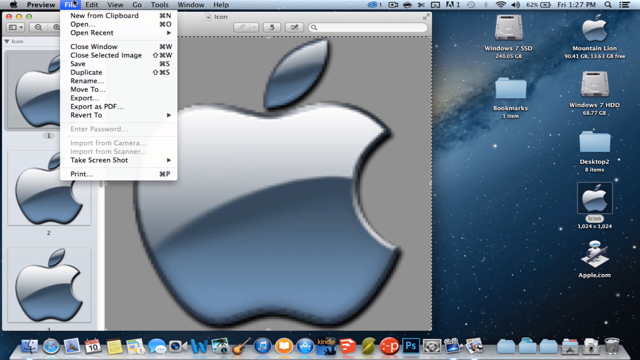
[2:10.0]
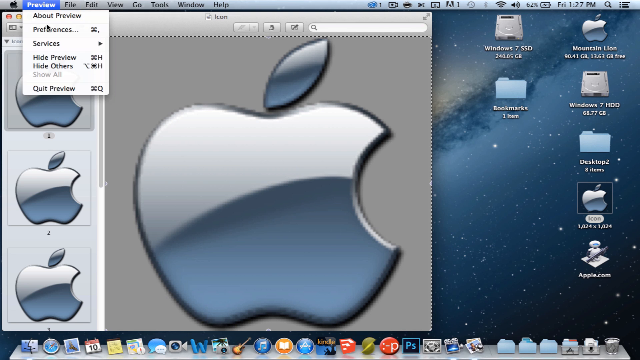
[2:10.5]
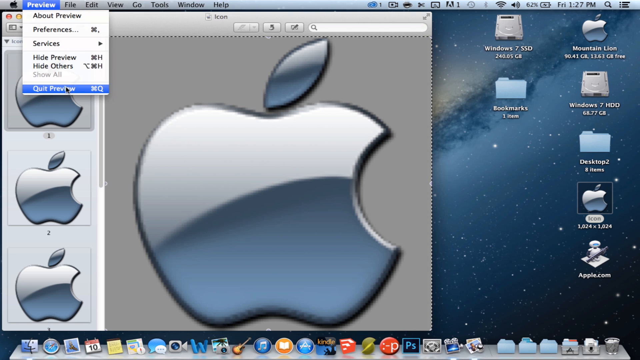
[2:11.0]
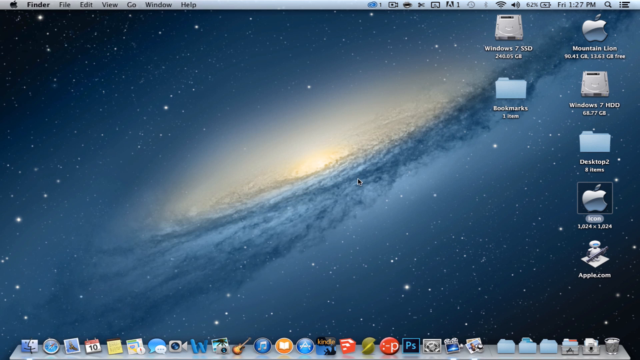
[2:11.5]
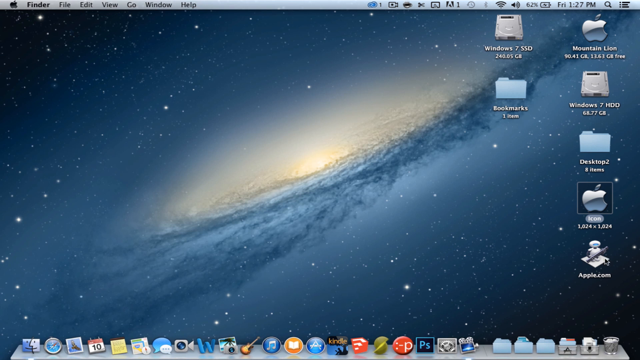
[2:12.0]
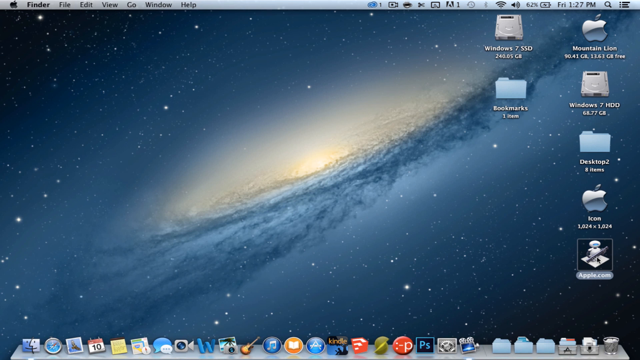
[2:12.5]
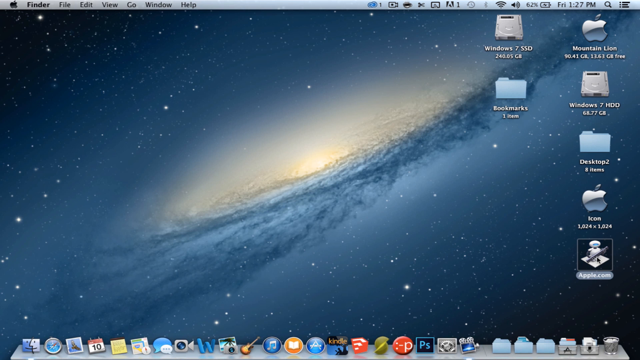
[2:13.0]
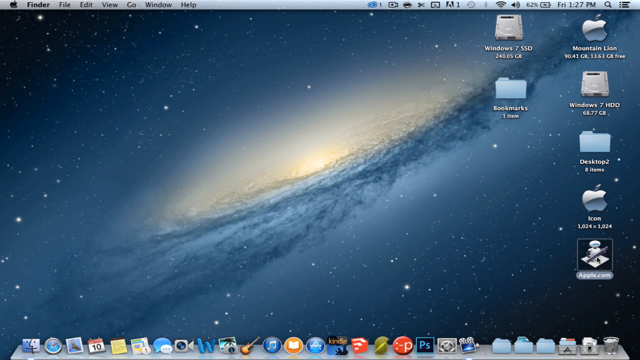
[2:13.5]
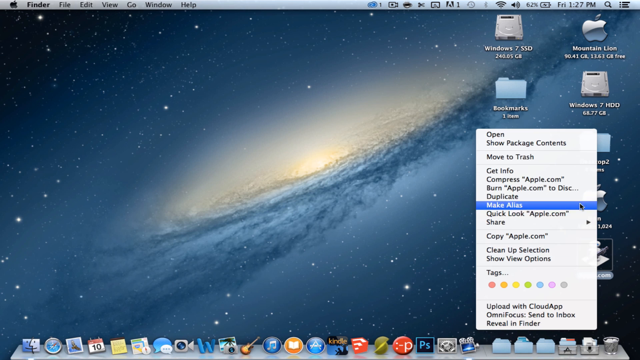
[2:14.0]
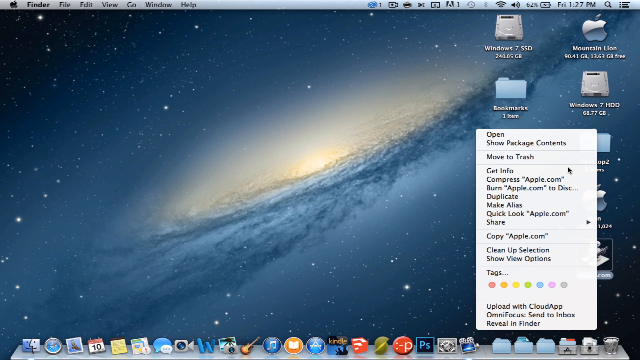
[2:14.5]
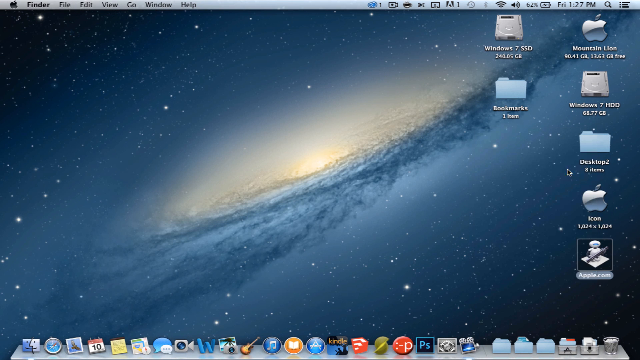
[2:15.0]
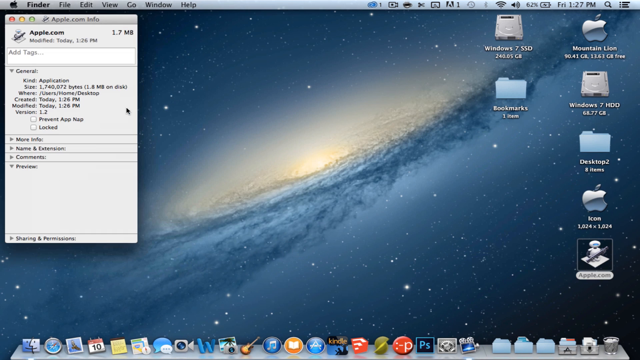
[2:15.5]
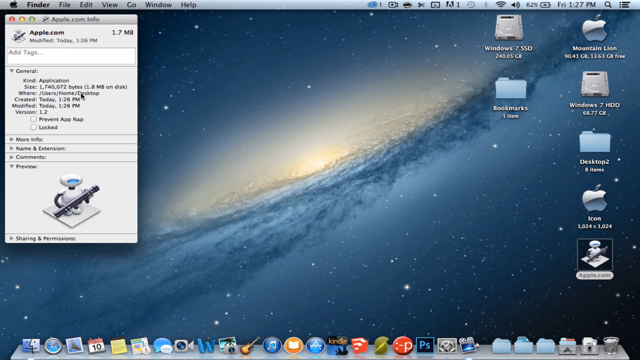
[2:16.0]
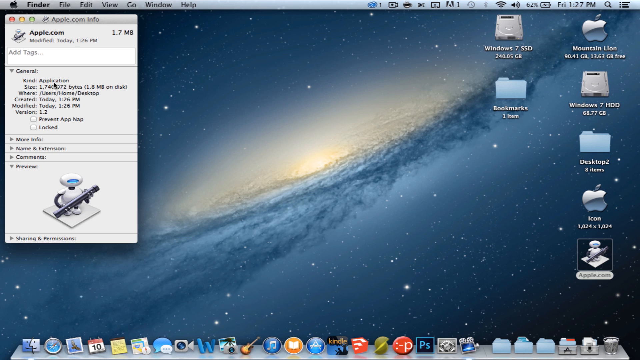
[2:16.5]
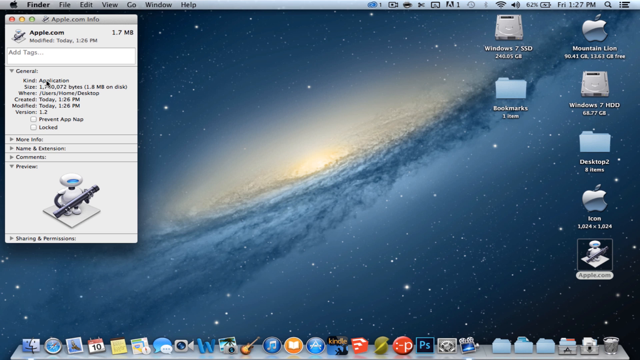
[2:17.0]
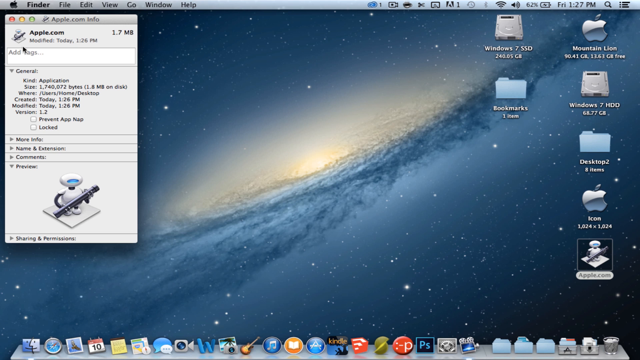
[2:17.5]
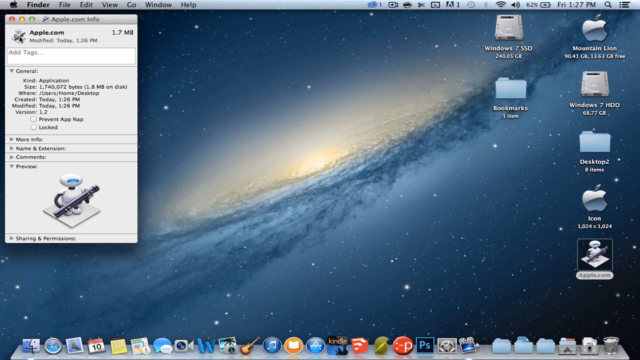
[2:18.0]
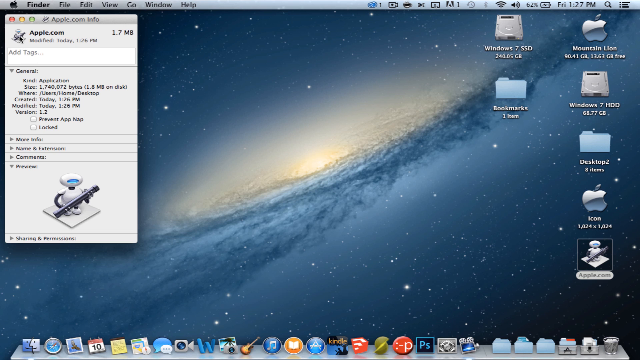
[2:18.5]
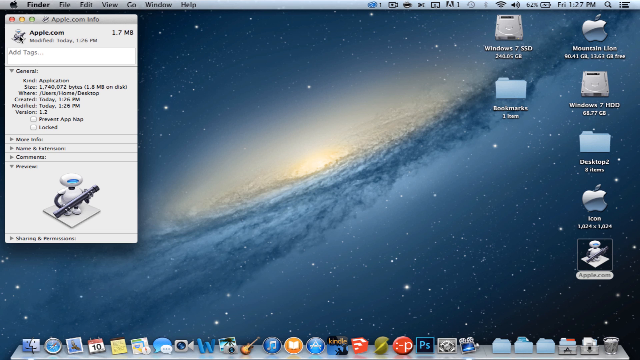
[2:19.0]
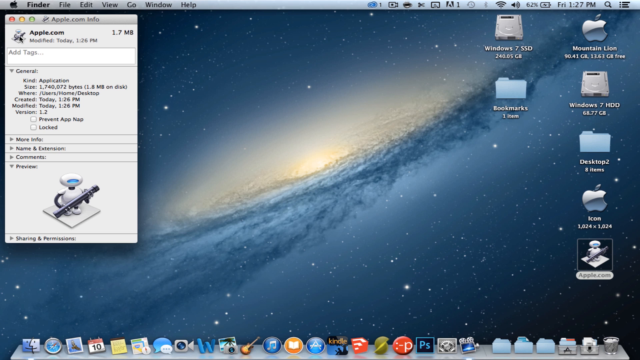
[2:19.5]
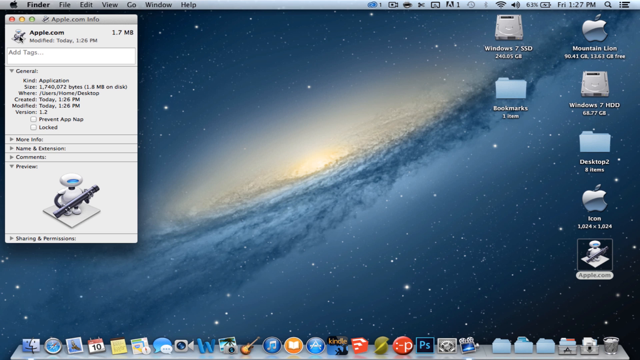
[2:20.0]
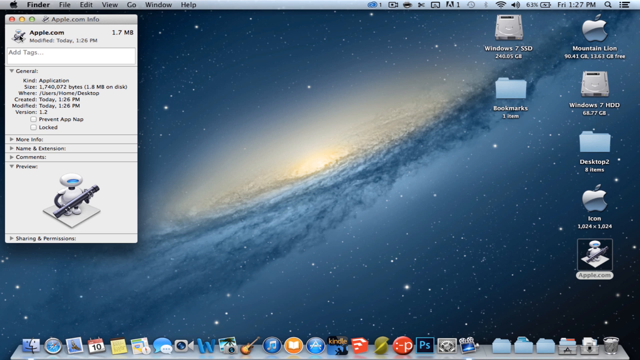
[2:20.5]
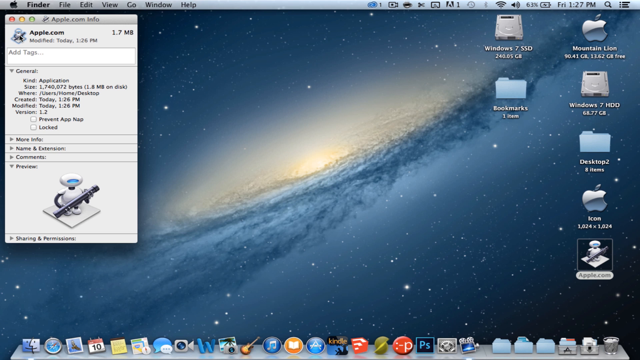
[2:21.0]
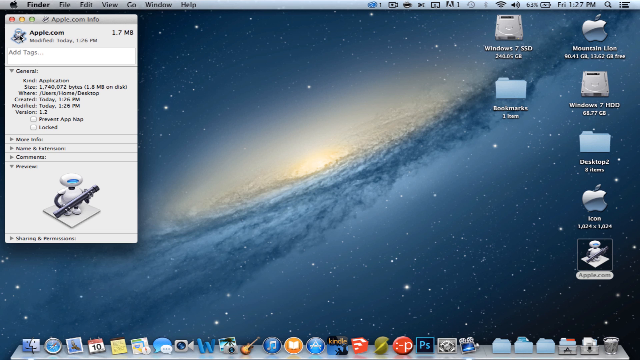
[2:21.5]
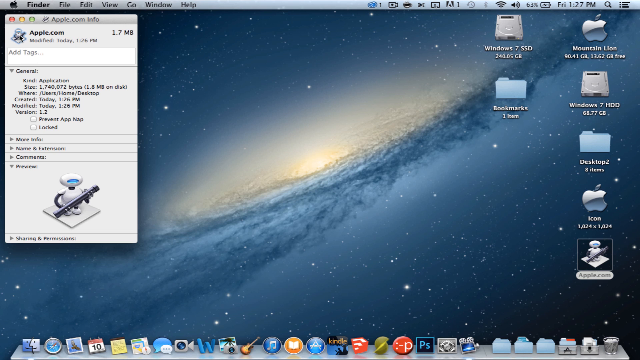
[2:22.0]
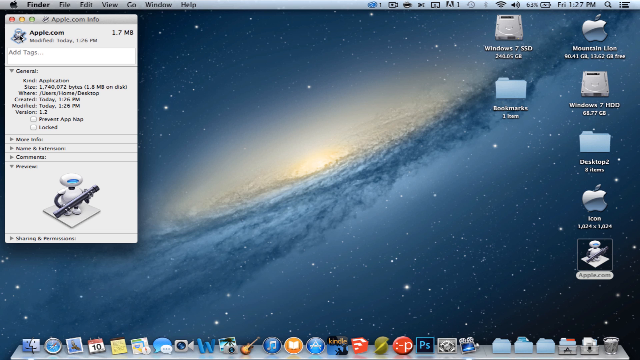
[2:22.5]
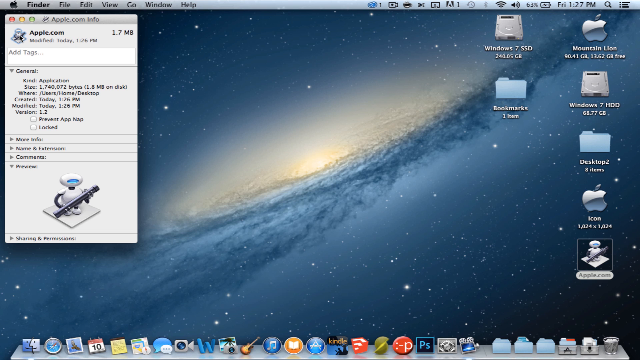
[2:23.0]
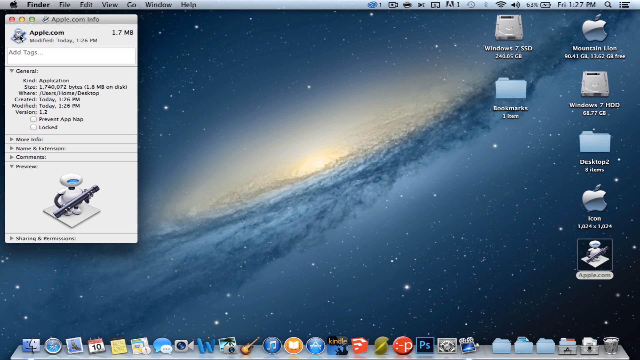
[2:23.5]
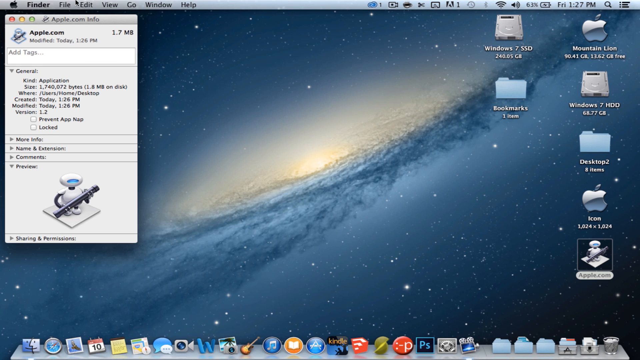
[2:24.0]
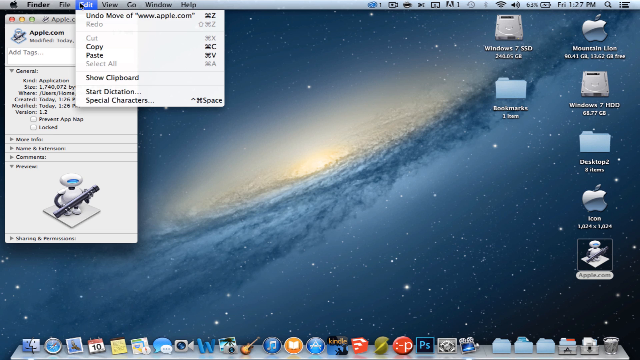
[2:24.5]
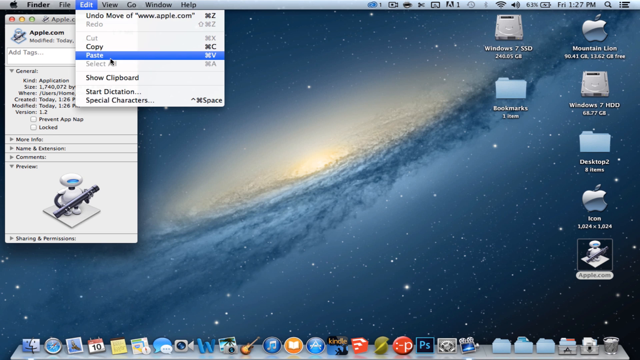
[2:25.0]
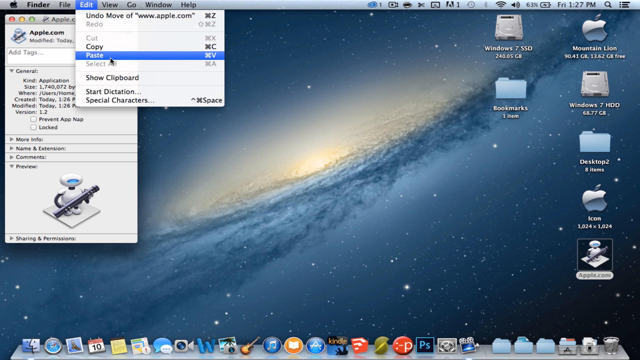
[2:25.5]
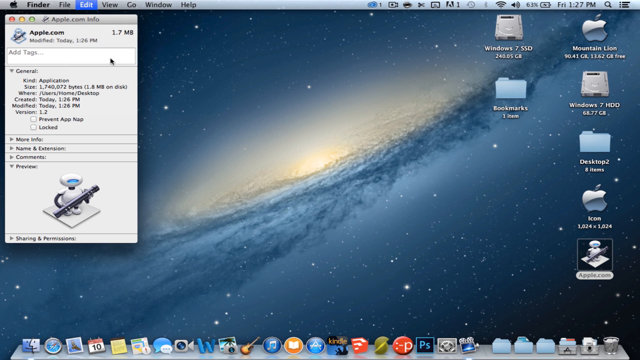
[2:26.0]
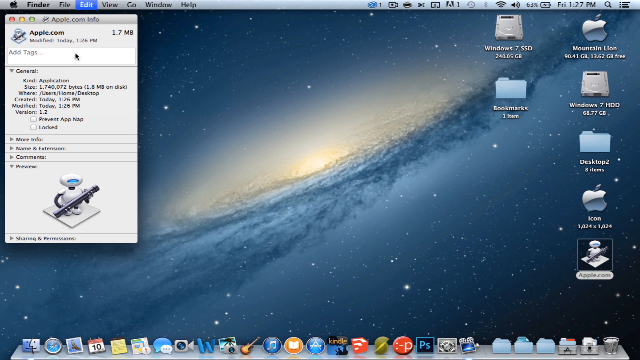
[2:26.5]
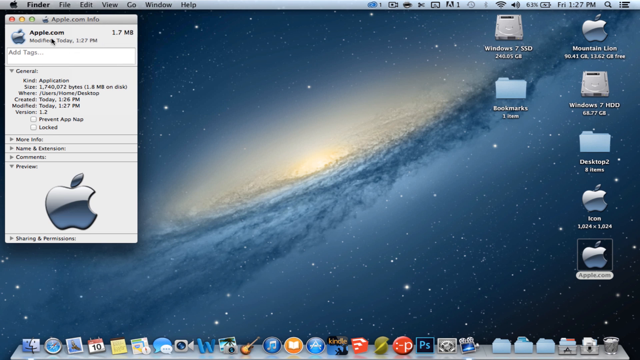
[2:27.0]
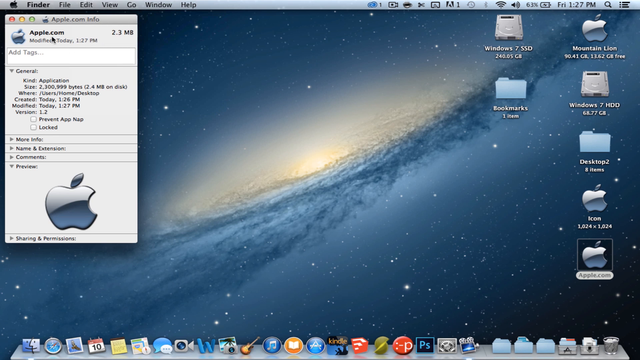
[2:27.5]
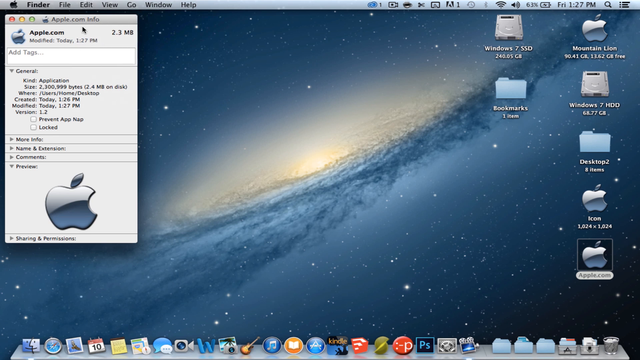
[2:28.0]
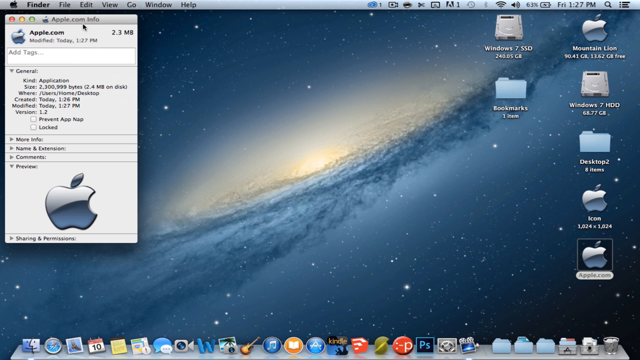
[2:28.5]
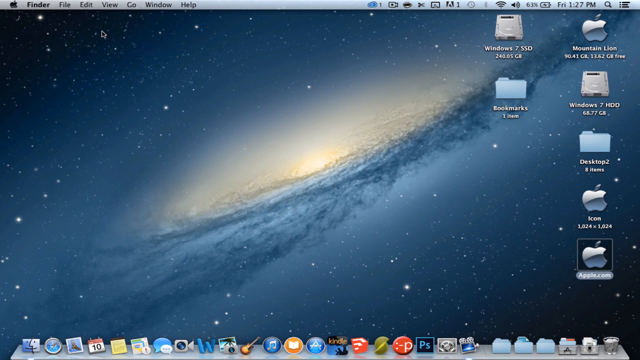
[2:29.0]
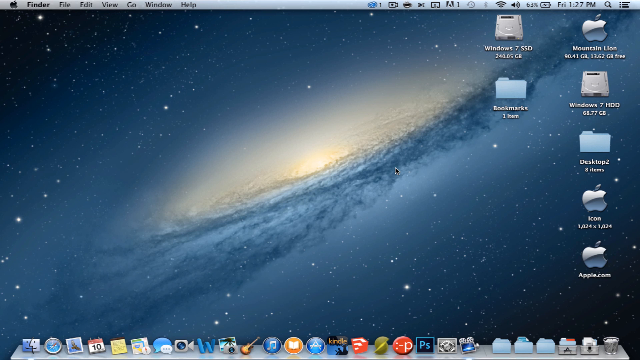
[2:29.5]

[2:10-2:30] The user goes to the File menu in the top left corner of the screen and selects Quit Preview, closing the image viewer with the Apple logo designs. Back on the desktop, they right-click the Apple.com application created with Automator and select Get Info. An information window appears showing the application's details. The user moves the cursor to the top left corner of the info window, where the current default application icon is displayed, clicks the icon to highlight it, then opens the Edit menu in the top menu bar and selects Paste. The Apple.com application's icon instantly updates, replacing the default Automator icon with the copied Apple logo image.